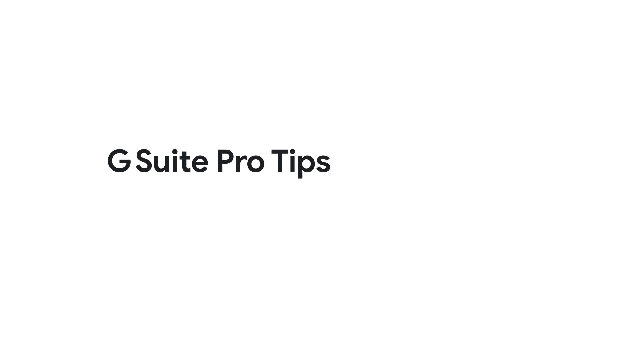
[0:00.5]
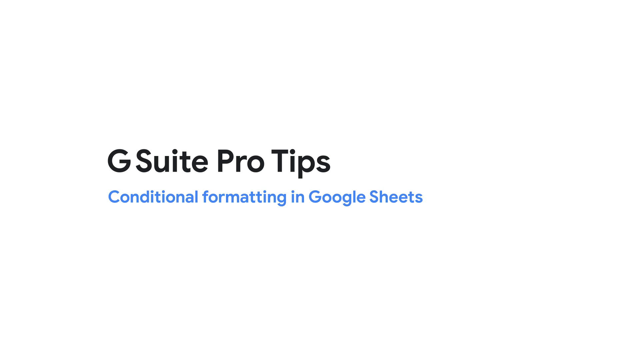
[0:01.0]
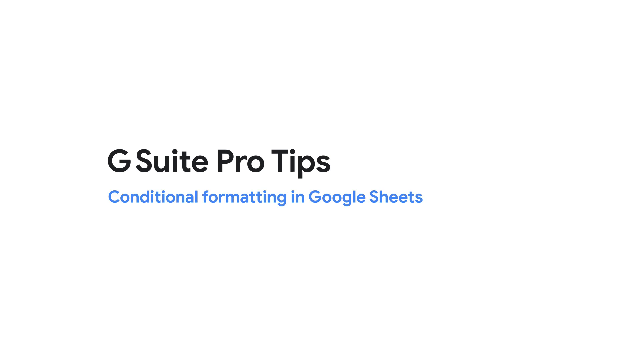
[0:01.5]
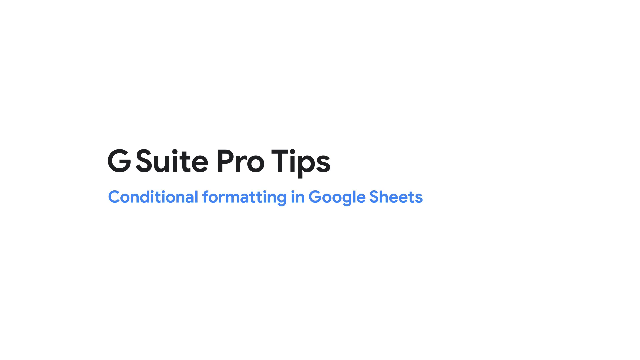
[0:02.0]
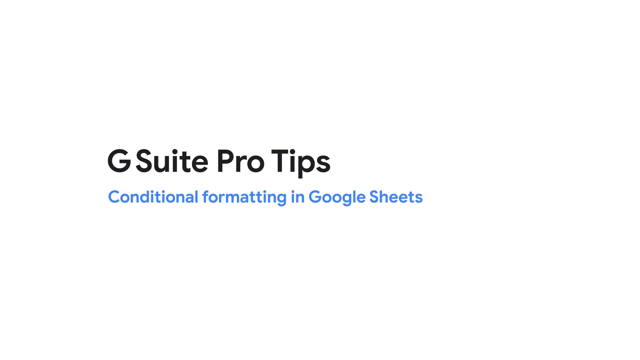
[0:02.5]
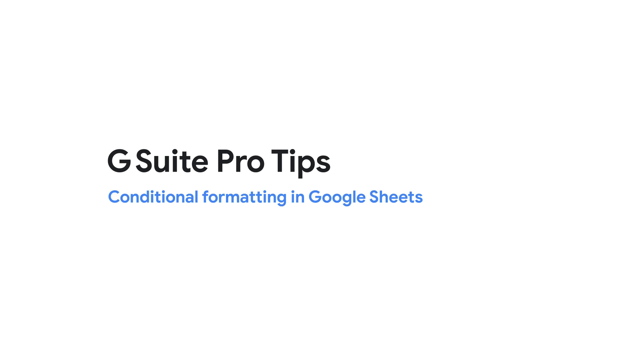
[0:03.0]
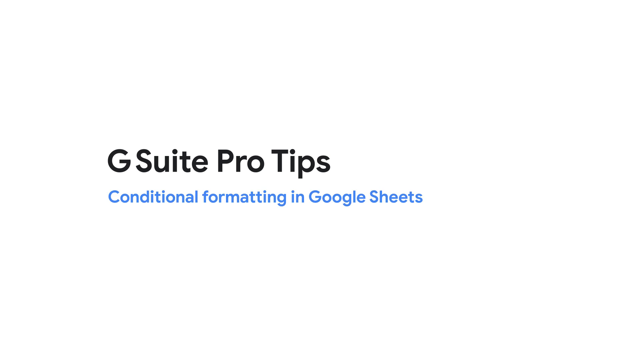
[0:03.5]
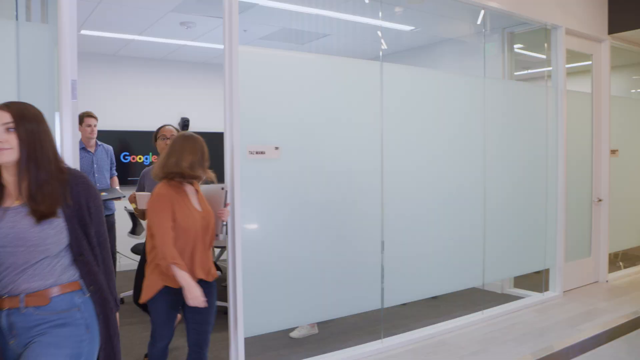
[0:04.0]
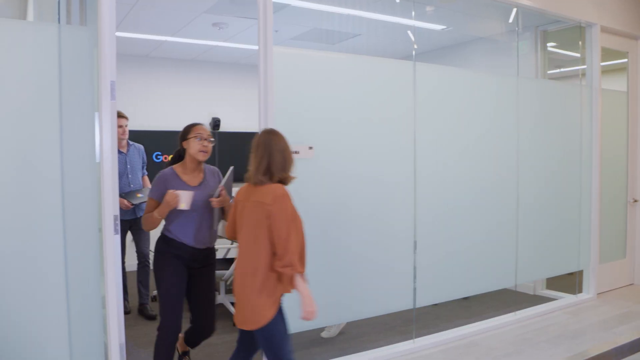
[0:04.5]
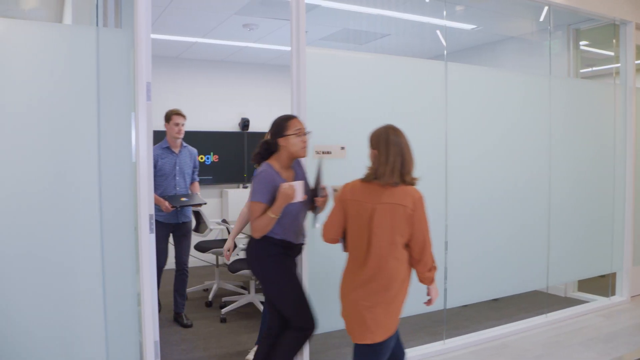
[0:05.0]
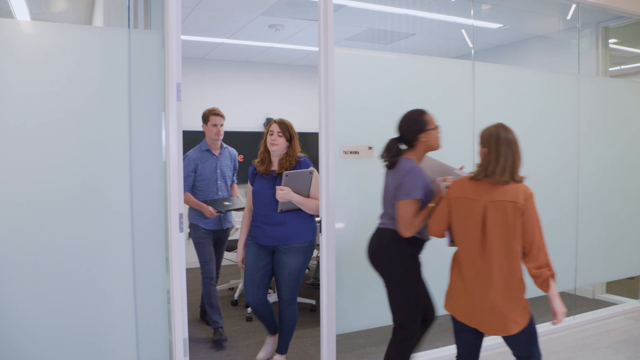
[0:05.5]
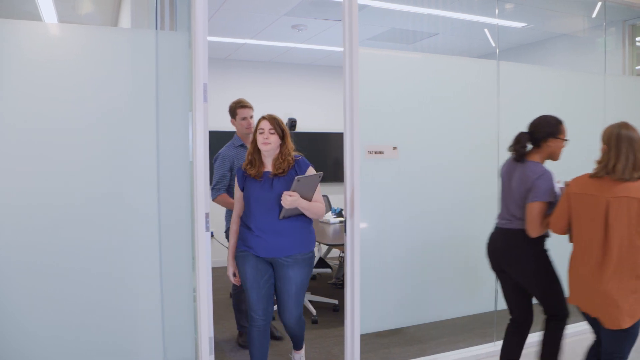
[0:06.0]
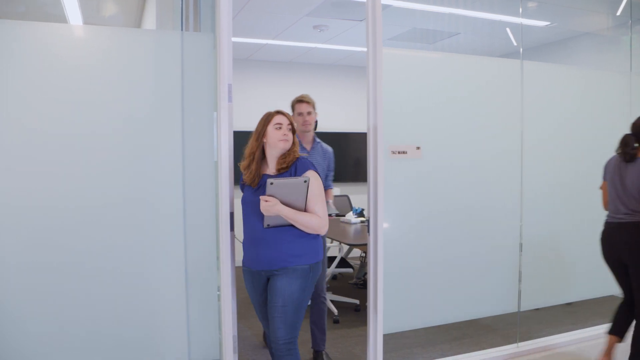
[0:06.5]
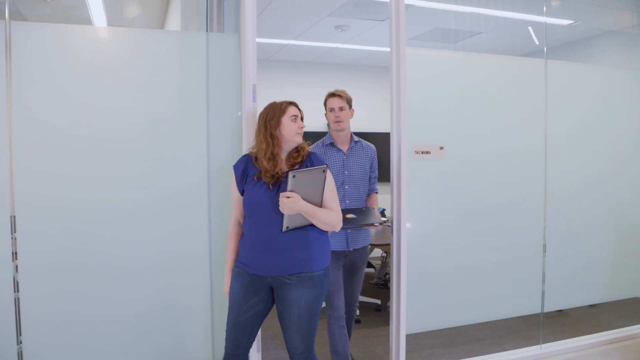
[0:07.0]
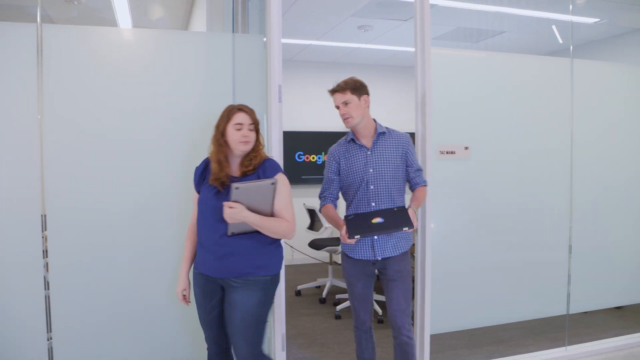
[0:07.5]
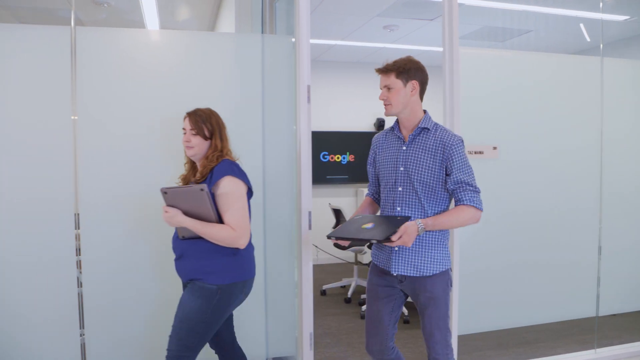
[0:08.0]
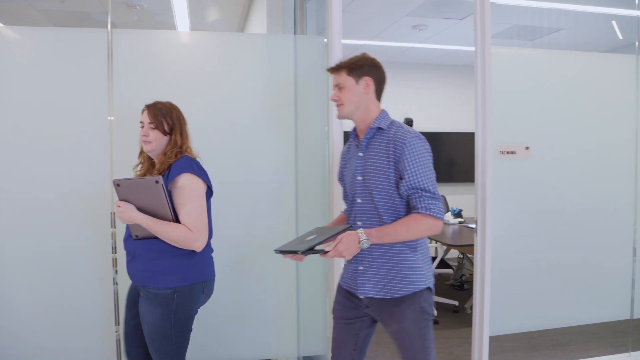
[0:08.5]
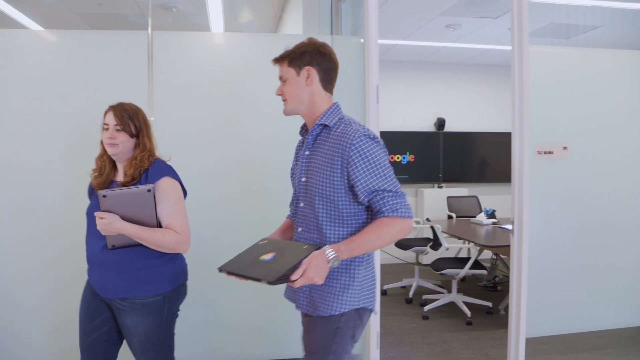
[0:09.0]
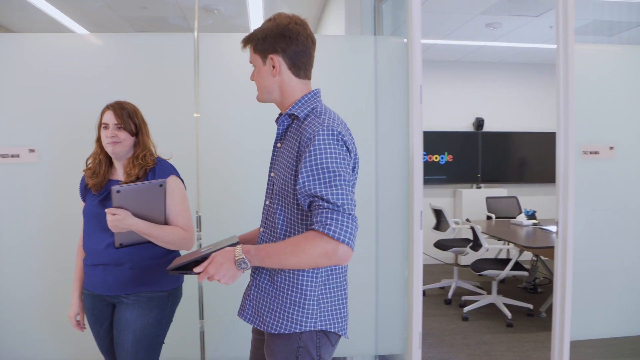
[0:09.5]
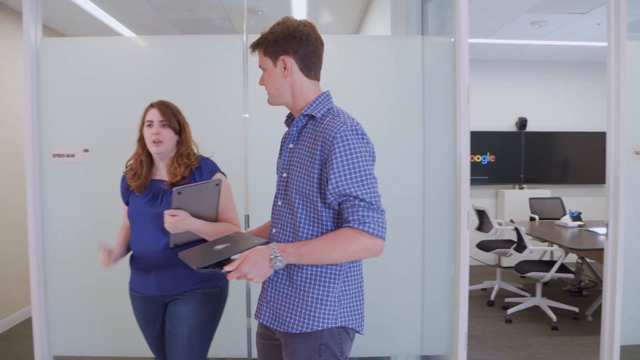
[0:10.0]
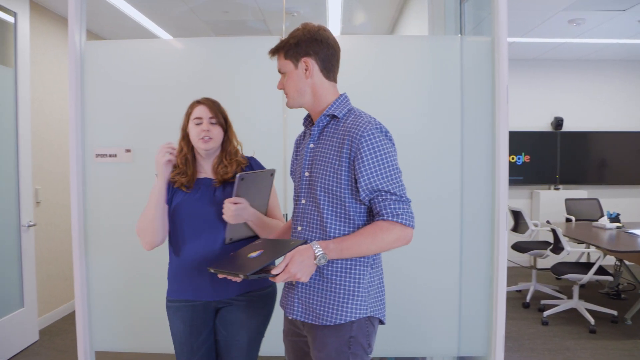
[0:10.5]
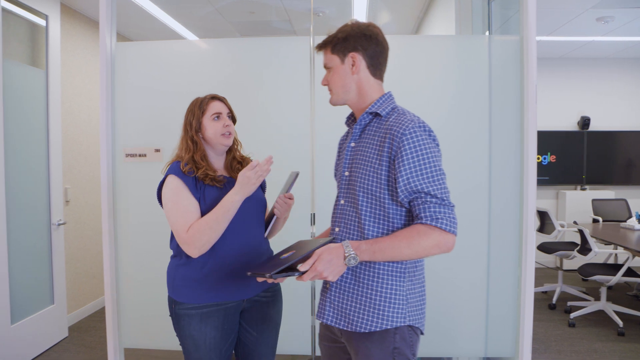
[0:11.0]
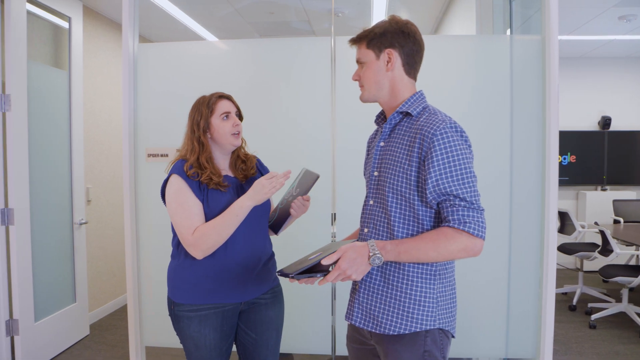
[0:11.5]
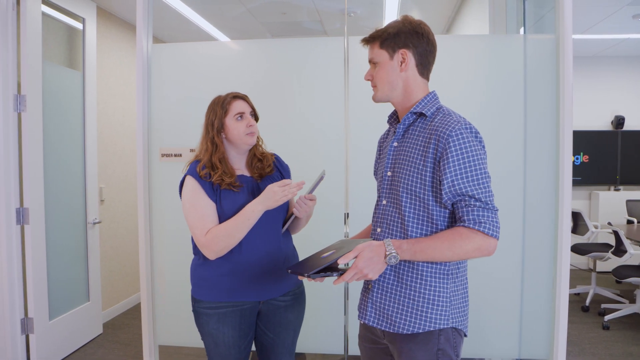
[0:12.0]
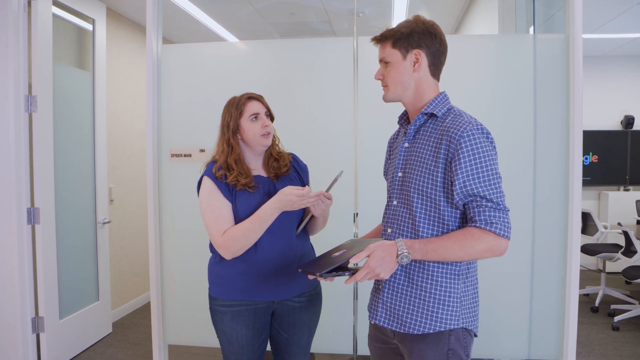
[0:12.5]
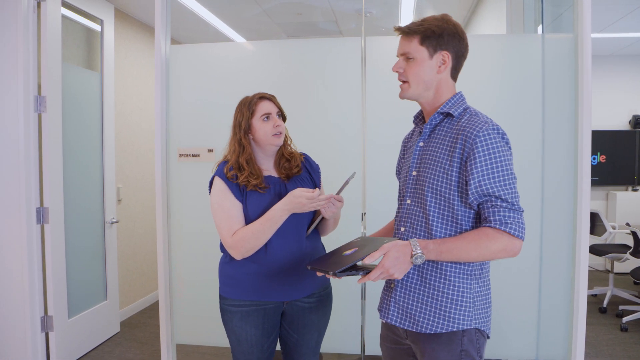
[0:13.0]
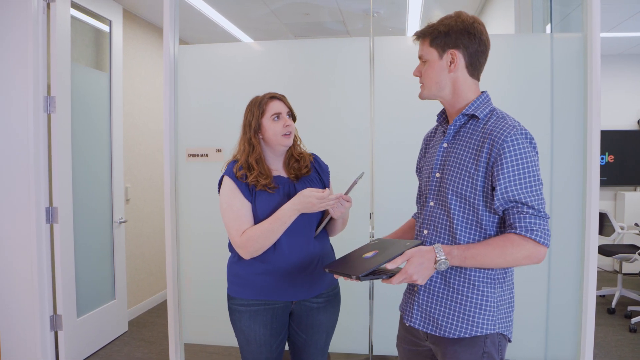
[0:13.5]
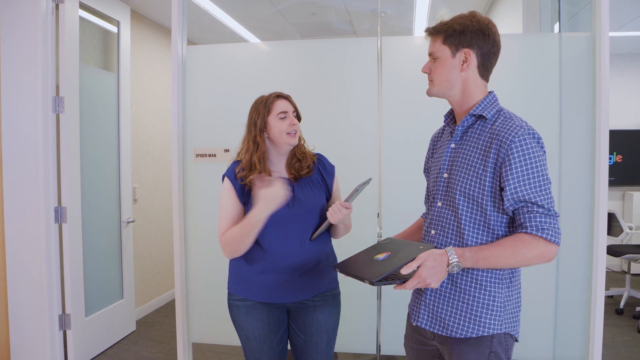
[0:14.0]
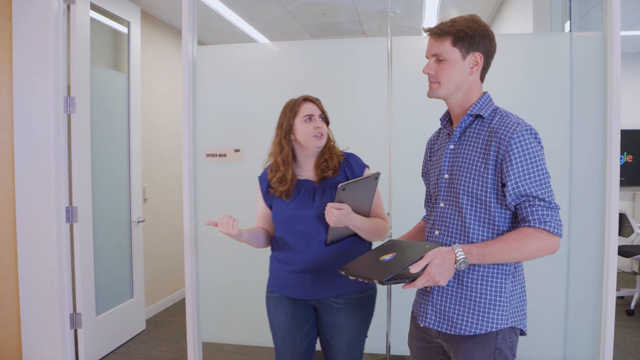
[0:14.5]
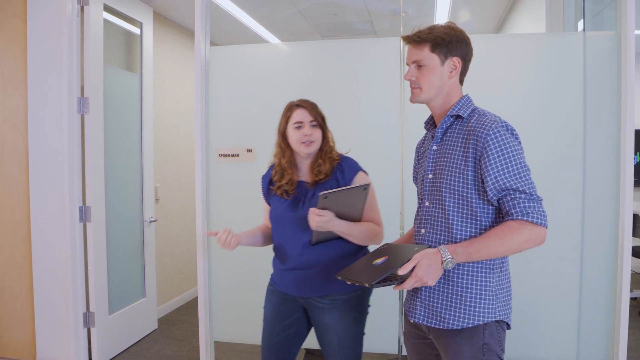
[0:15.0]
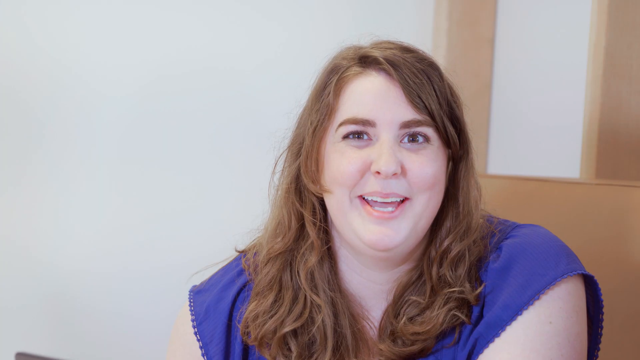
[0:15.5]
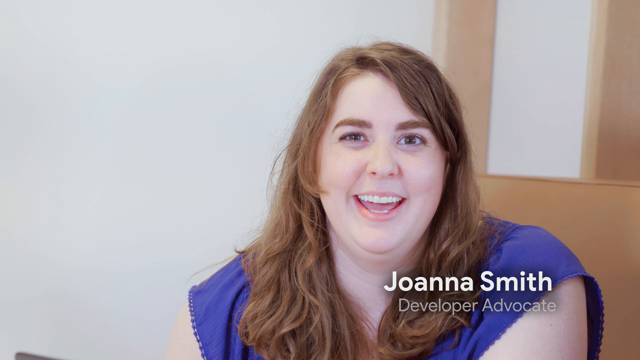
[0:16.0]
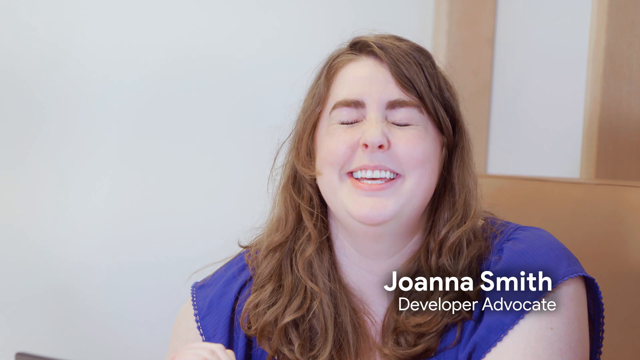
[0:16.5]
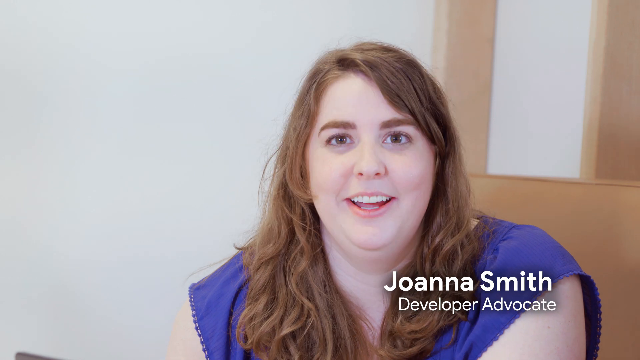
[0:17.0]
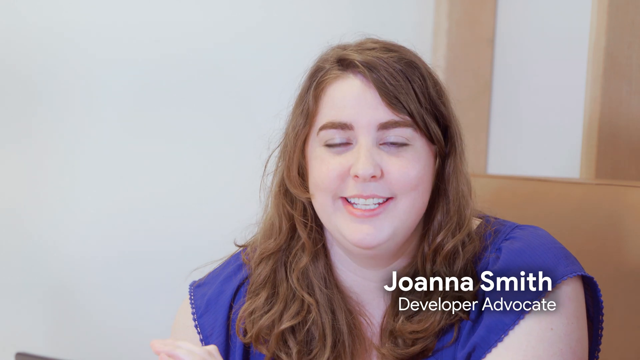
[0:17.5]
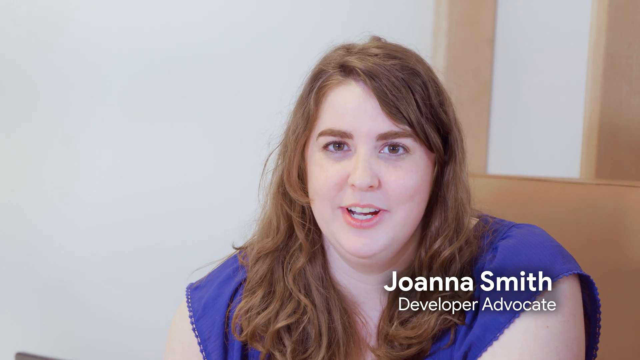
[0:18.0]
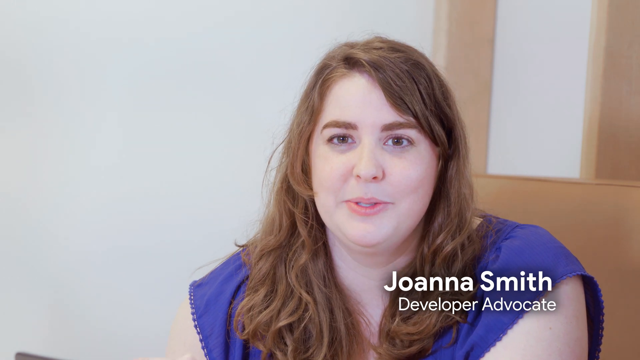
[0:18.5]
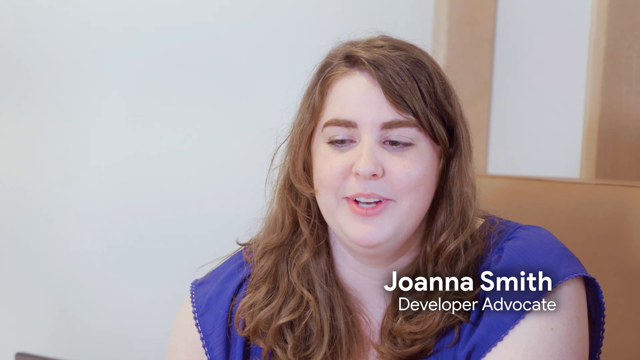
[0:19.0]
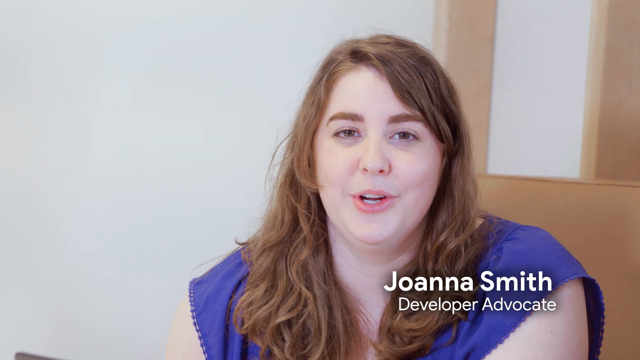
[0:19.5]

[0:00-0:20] The video opens with a G Suite pro tips logo written in black and blue on a white background. Different people, men and women, come out of a room. One woman moves drastically toward another woman who wears a coffee-colored top, and a guy comes out of the room in front of the man. A woman in a blue T-shirt holds a laptop, and she and another person talk to each other; both wear blue shirts and both hold laptops. The setting changes to an office, where a woman named Johanna Smith, the developer advocate, looks at the camera and appears to be talking, moving her hands as if explaining something.